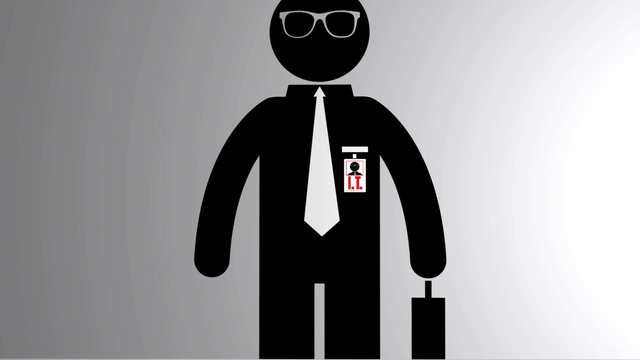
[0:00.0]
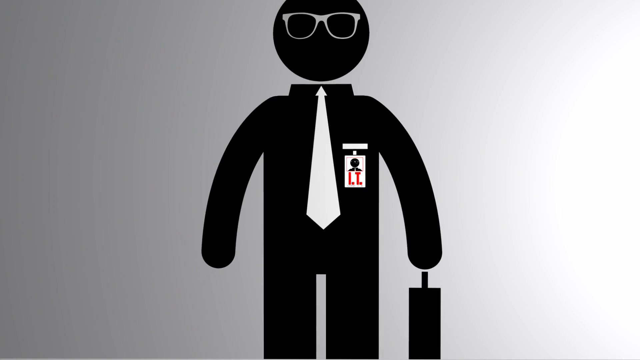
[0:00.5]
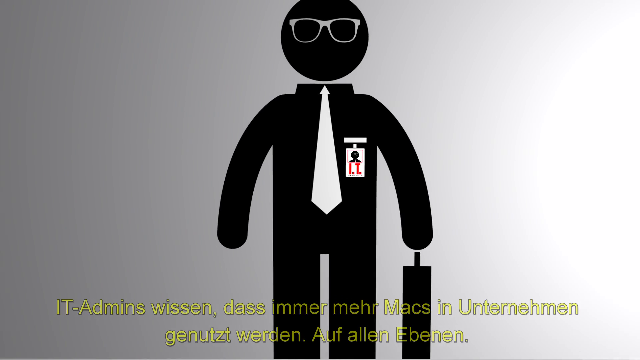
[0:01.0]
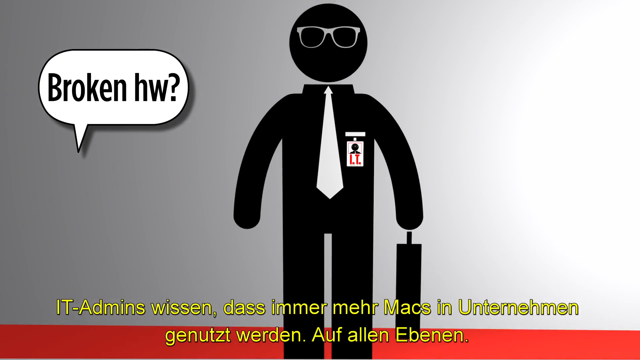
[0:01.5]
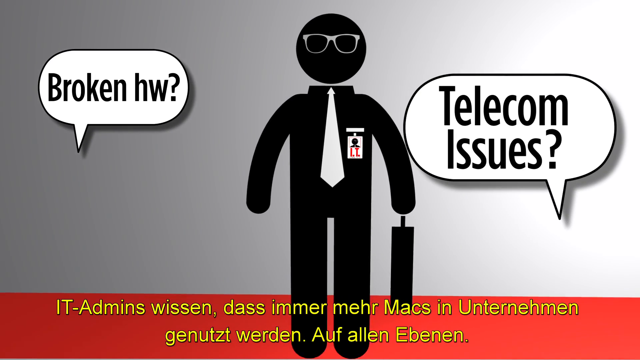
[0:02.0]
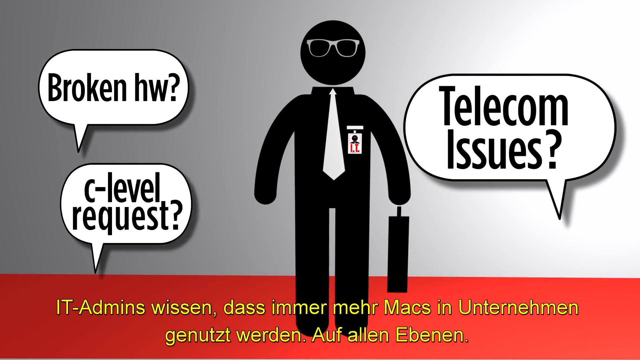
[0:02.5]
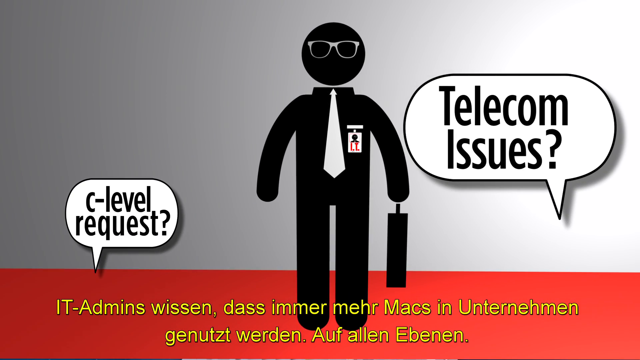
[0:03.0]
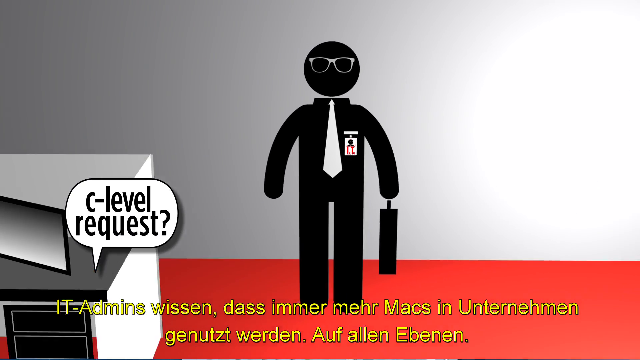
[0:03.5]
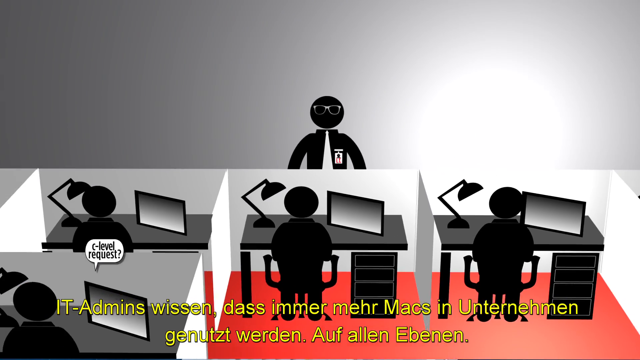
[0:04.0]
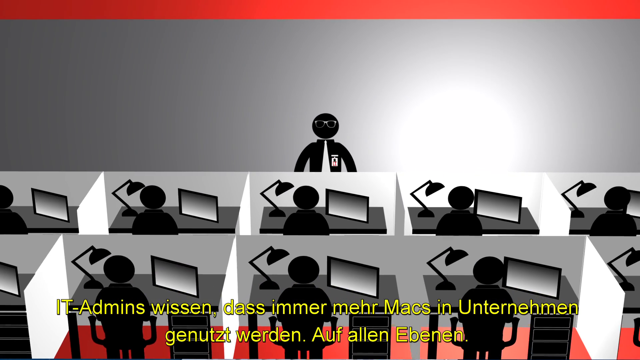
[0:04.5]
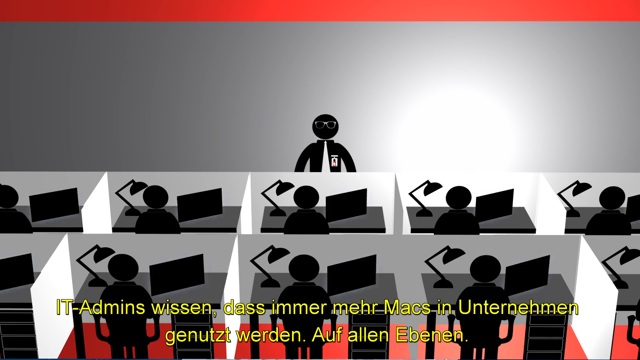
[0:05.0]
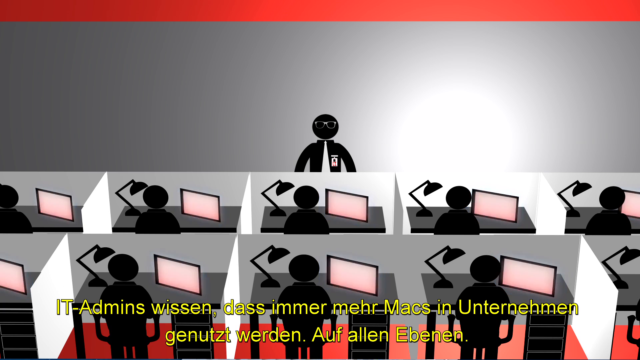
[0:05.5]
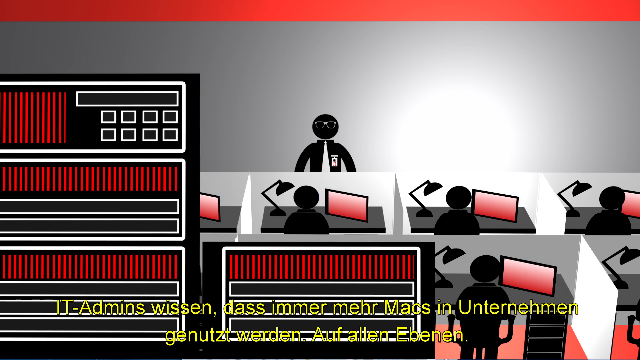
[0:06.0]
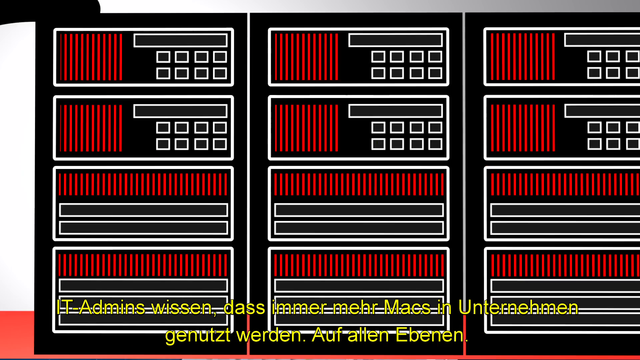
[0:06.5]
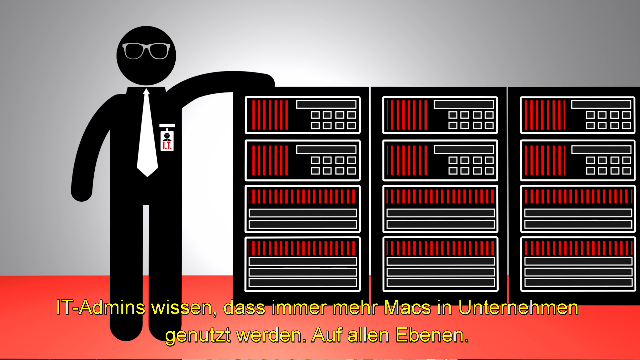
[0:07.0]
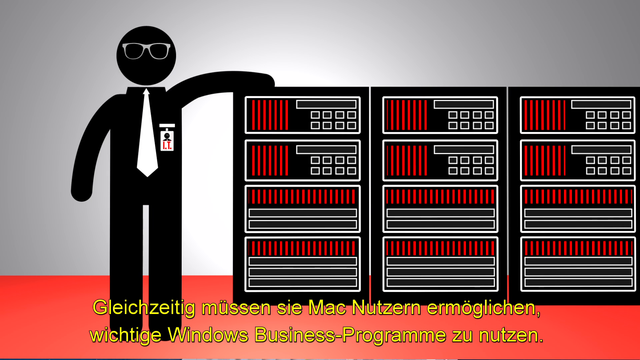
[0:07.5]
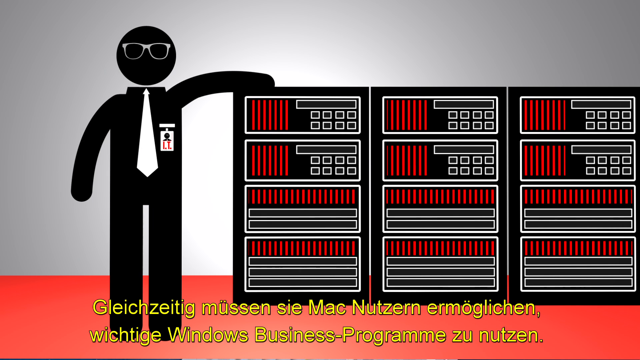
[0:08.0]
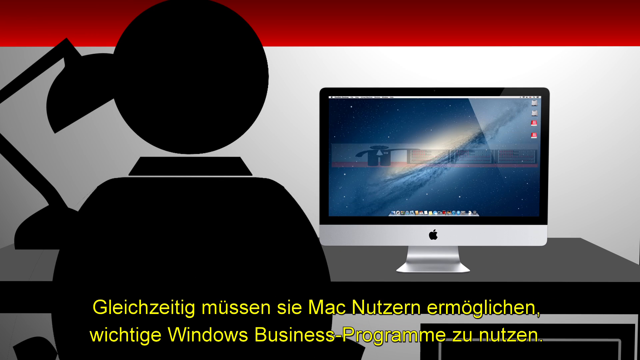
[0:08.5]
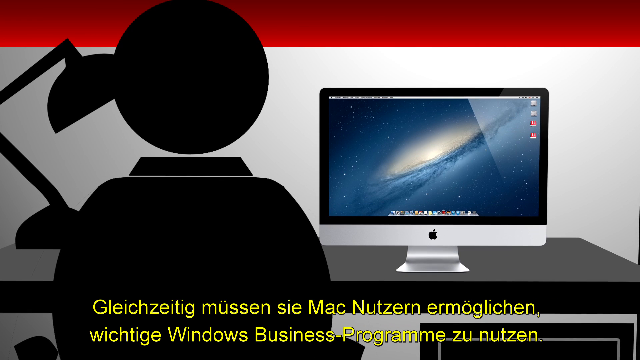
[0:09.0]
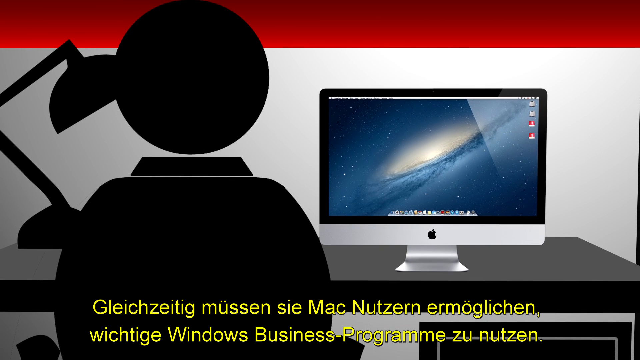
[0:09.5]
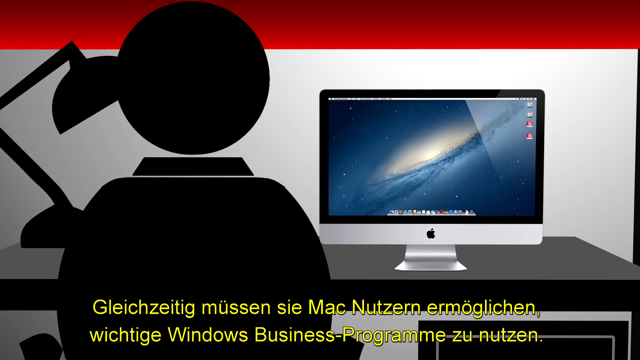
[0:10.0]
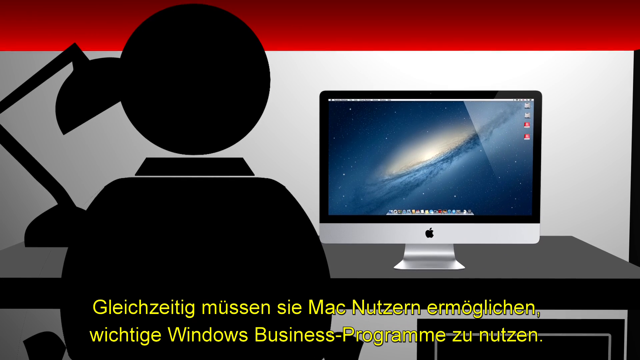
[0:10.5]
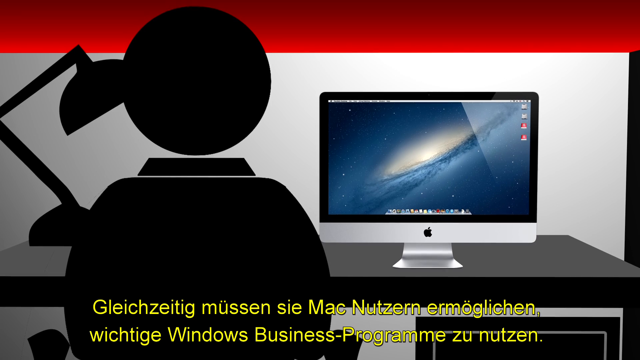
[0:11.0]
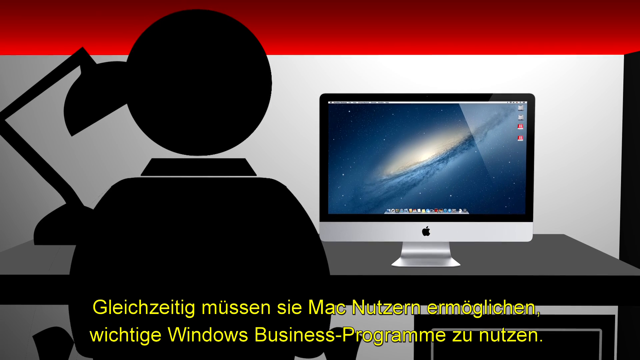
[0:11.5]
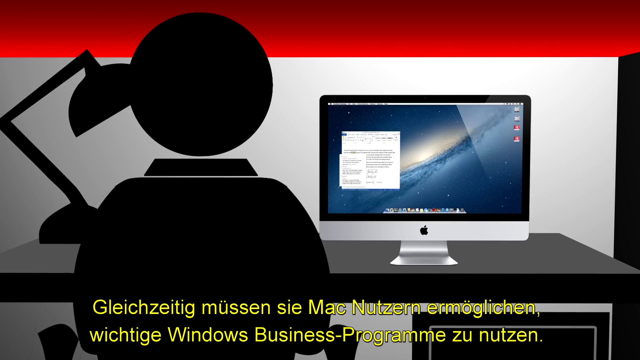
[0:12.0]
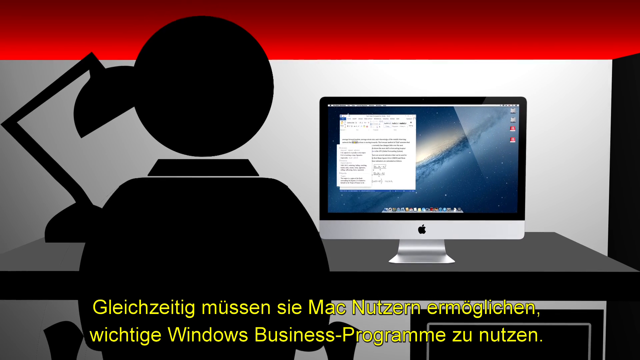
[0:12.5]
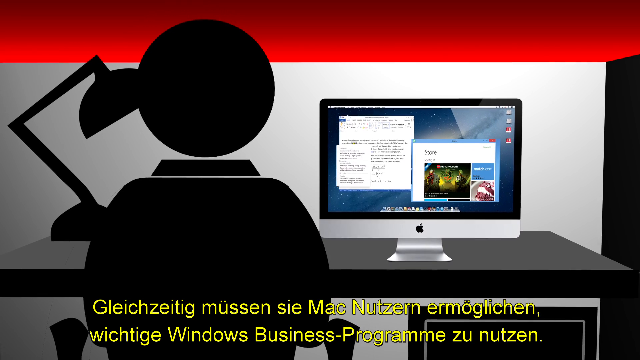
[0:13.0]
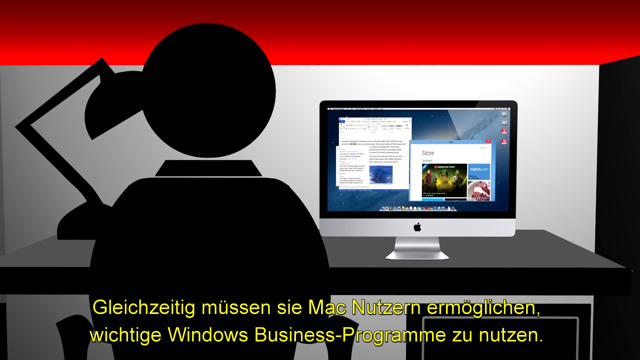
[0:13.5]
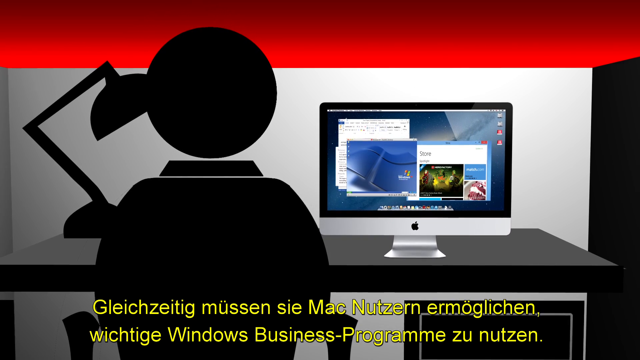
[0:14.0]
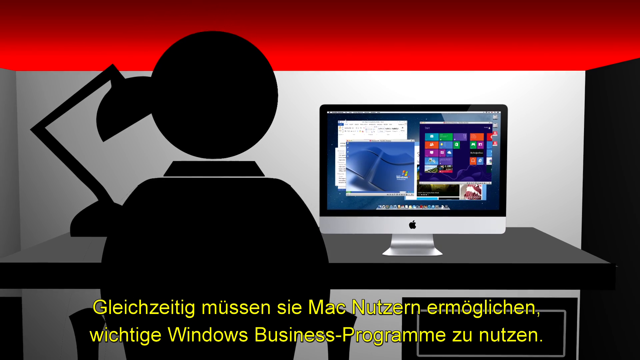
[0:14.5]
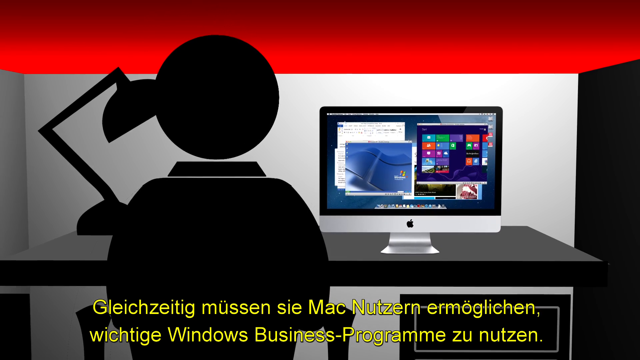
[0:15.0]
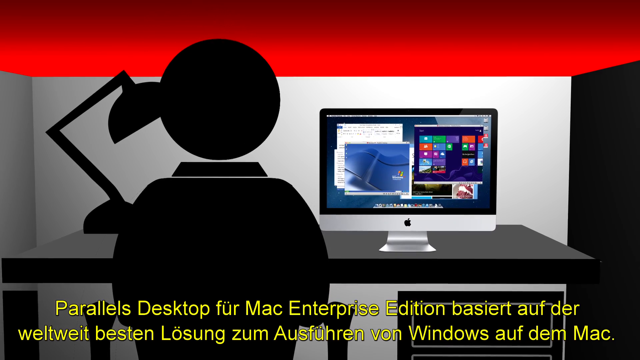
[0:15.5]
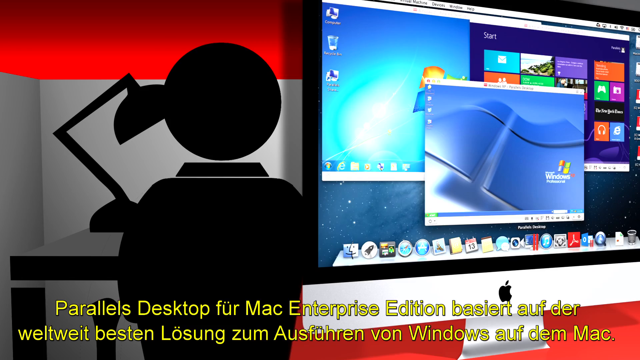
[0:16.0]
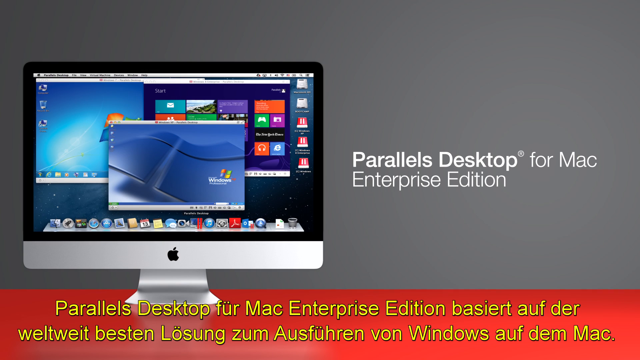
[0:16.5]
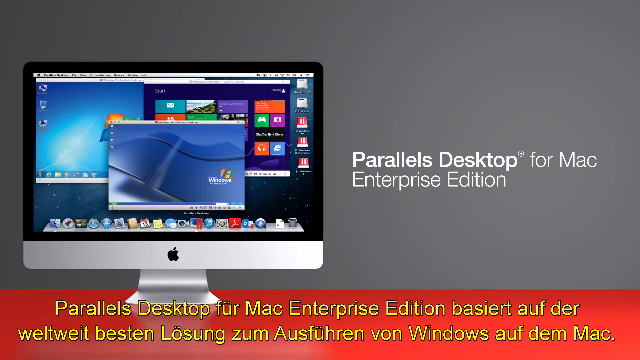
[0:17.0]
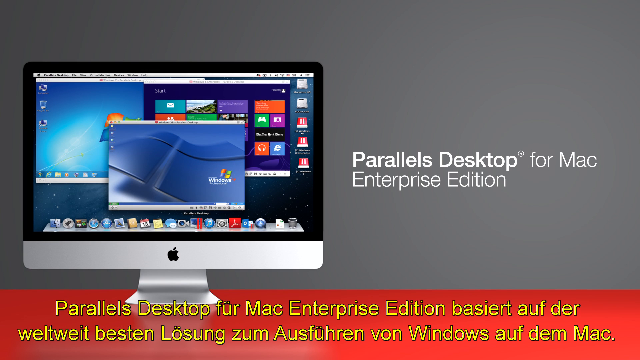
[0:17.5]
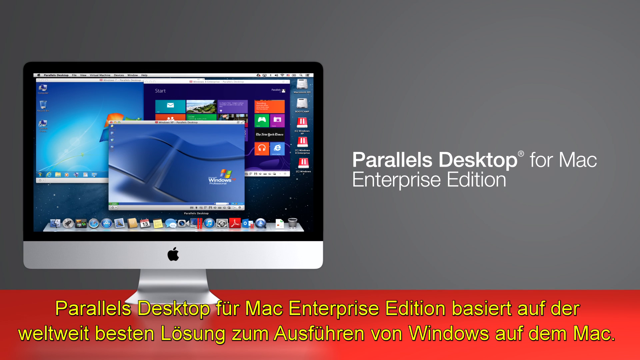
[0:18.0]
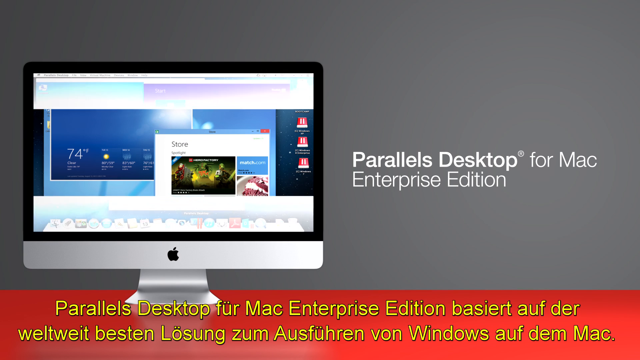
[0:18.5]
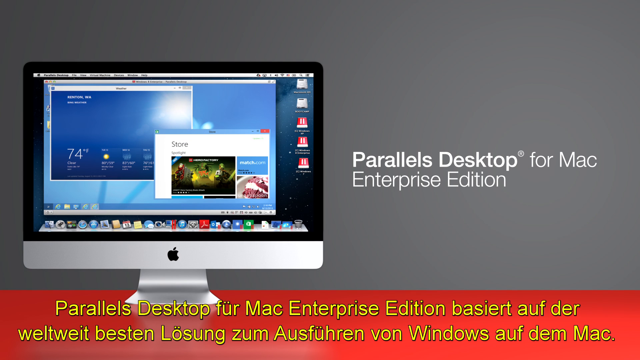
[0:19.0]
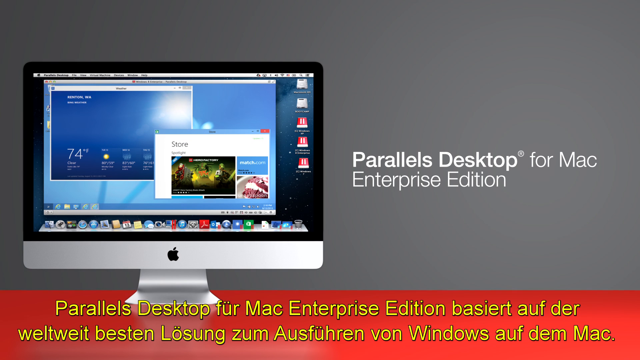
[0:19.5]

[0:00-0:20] A grayish background shows a cartoon of a man that is basically a silhouette, all black. His head is a black circle, and there is a white patch that is a necktie and what looks like a white square that looks like a badge. Text reads "broken hardware, C-level request". The scene fades to a bunch of these icons, each in a cubicle with the same lamp, looking at the same screen. A stack of cartoon servers follows: a black background with three black strips, each showing cartoon servers in black with white around the buttons. The man has his hand on the servers. The view peels back to reveal that this was in a Mac screen, and a man looks at that Mac screen and pulls up several different windows that pop up all at once.